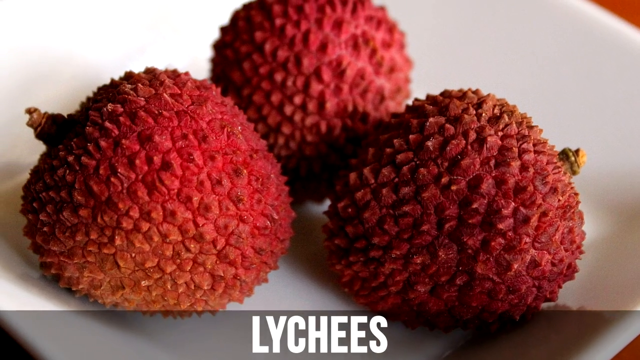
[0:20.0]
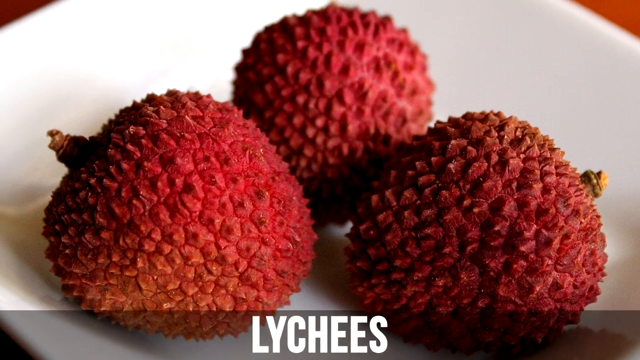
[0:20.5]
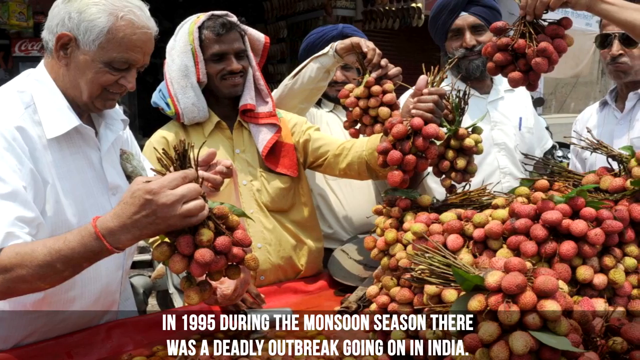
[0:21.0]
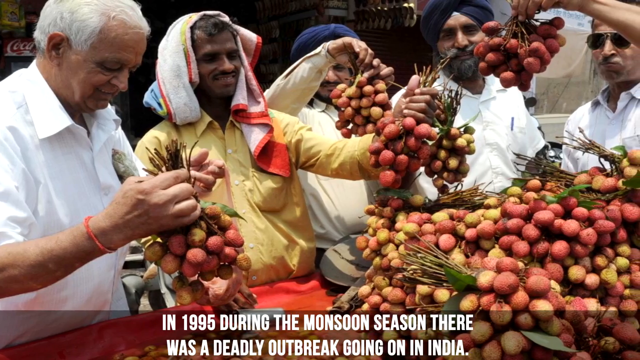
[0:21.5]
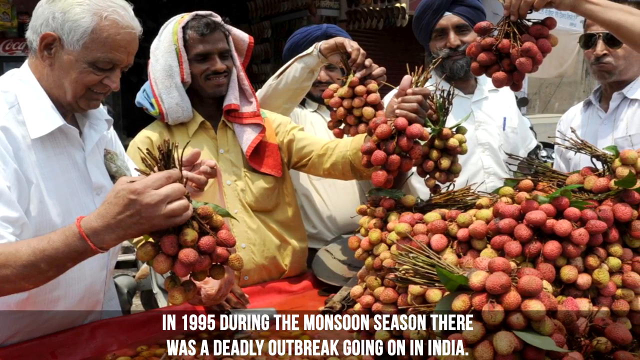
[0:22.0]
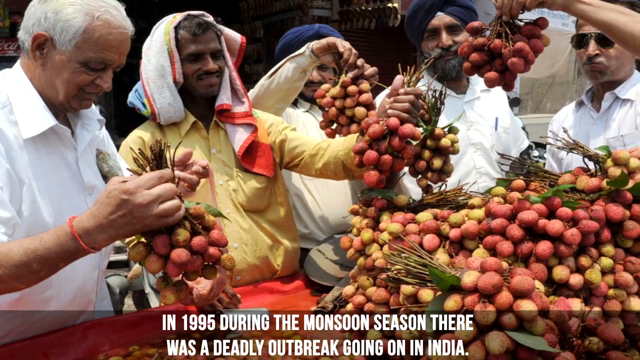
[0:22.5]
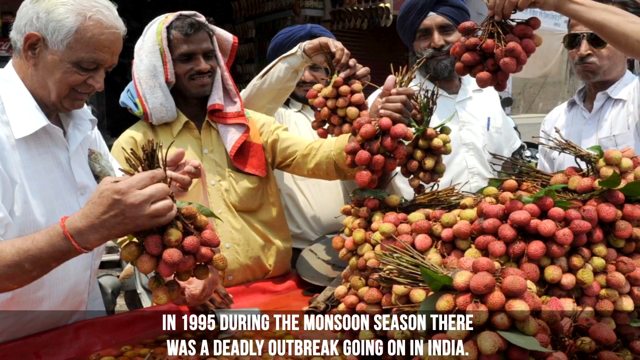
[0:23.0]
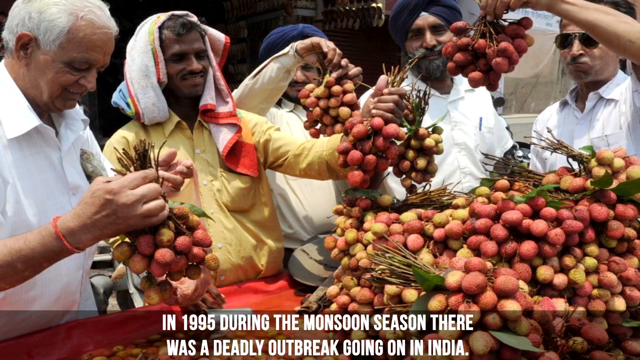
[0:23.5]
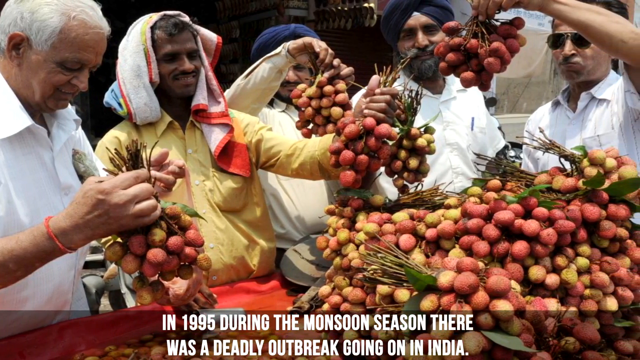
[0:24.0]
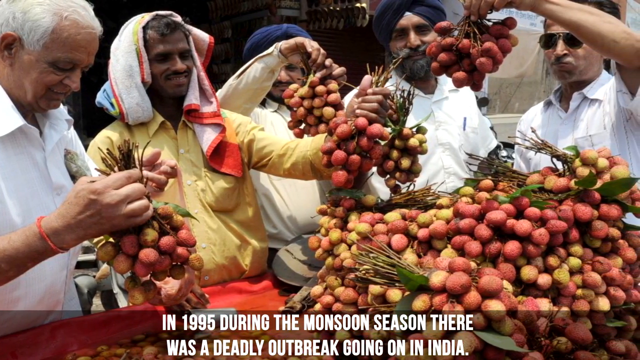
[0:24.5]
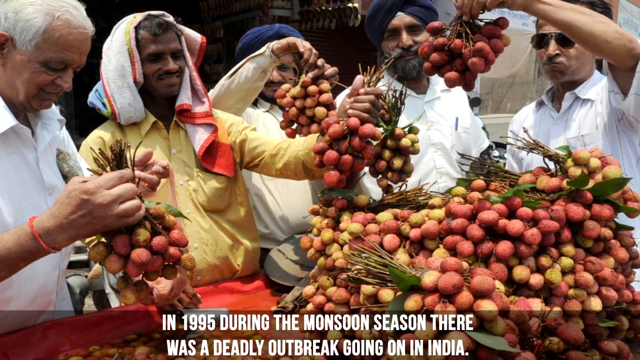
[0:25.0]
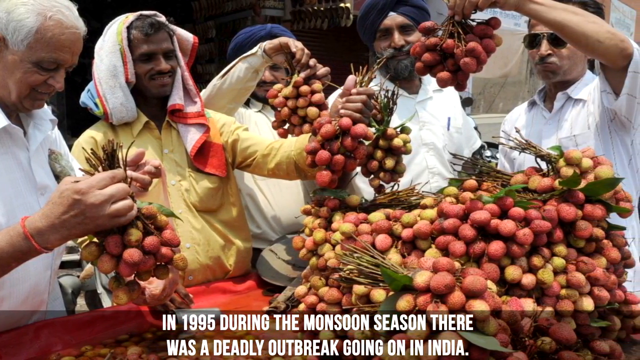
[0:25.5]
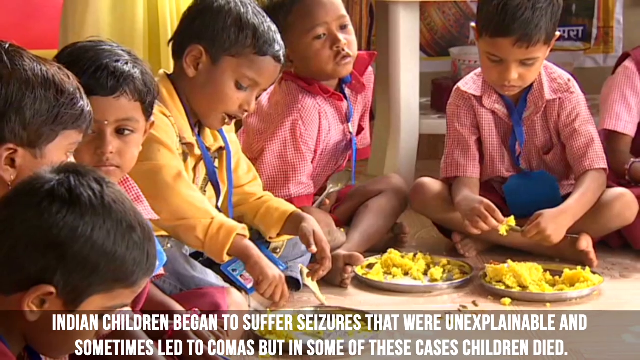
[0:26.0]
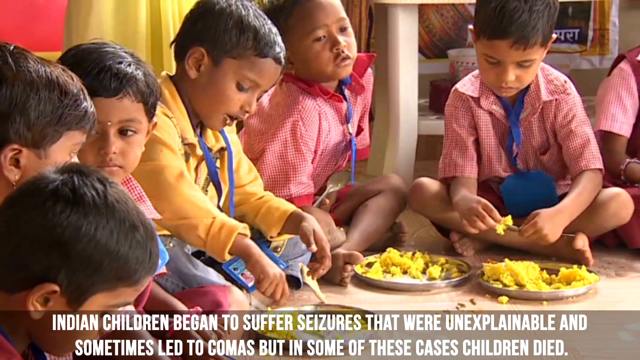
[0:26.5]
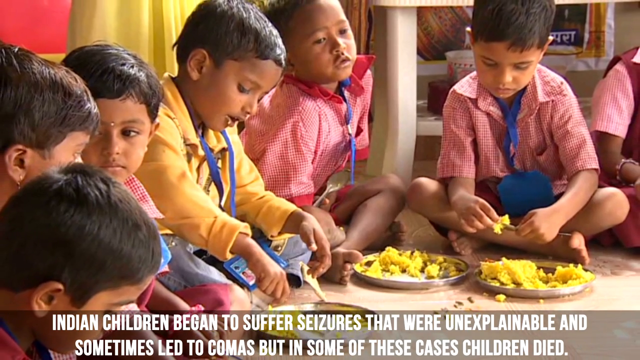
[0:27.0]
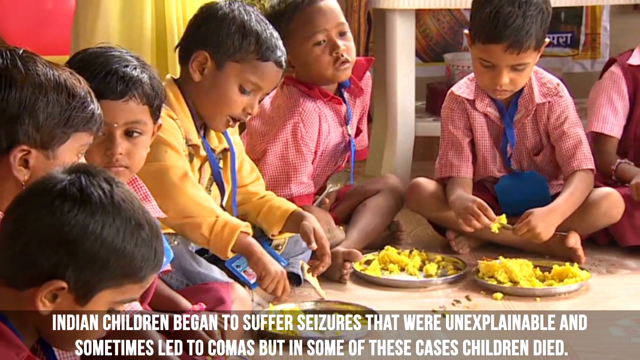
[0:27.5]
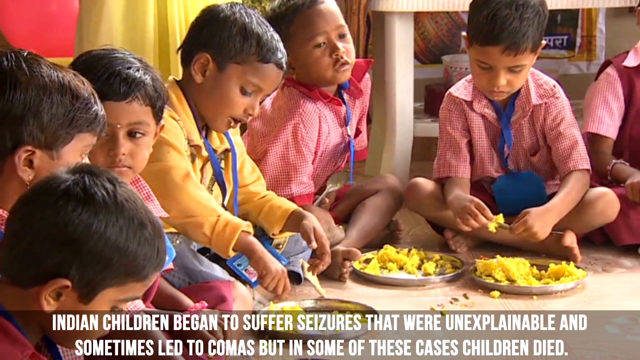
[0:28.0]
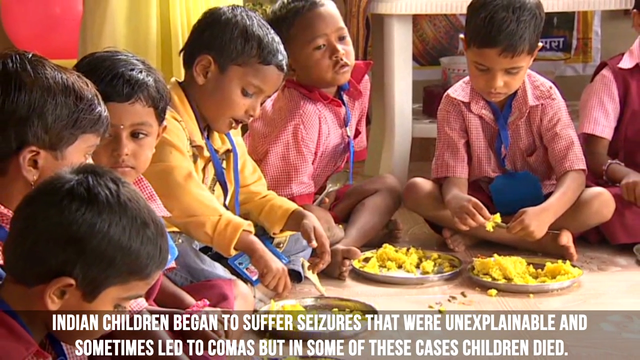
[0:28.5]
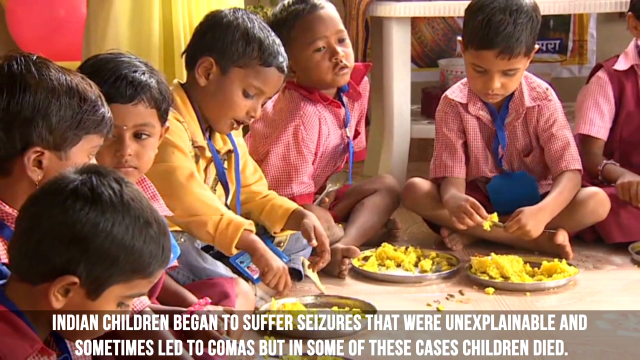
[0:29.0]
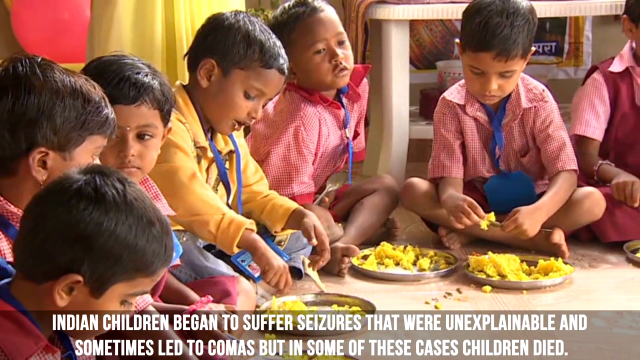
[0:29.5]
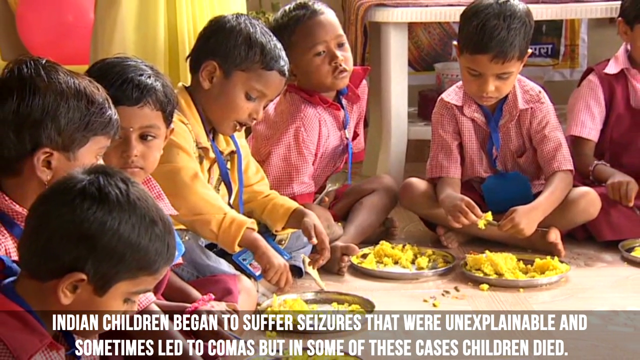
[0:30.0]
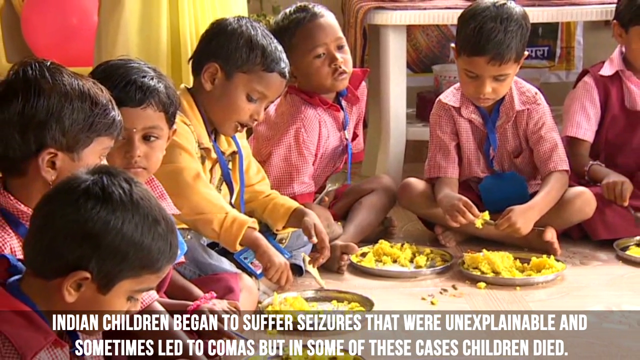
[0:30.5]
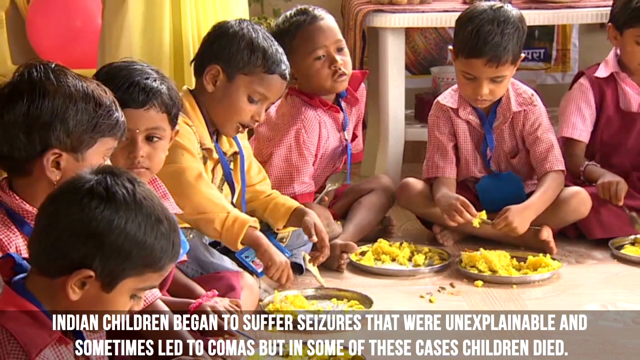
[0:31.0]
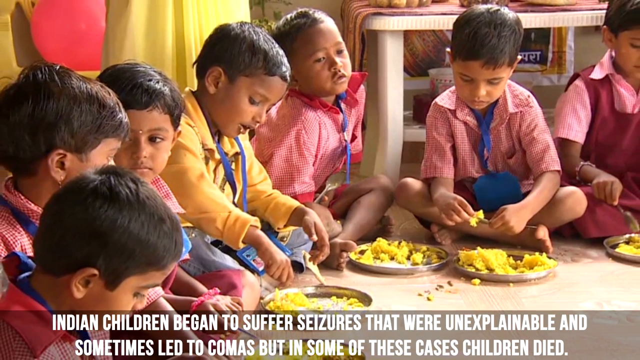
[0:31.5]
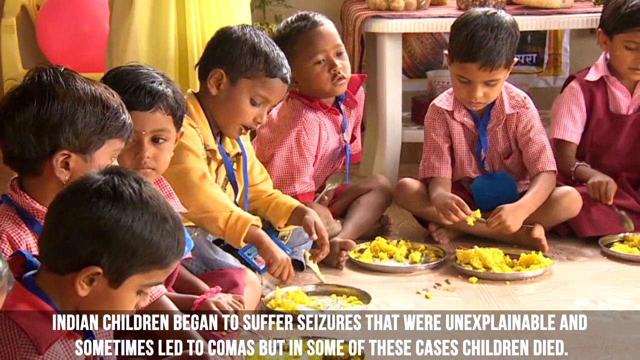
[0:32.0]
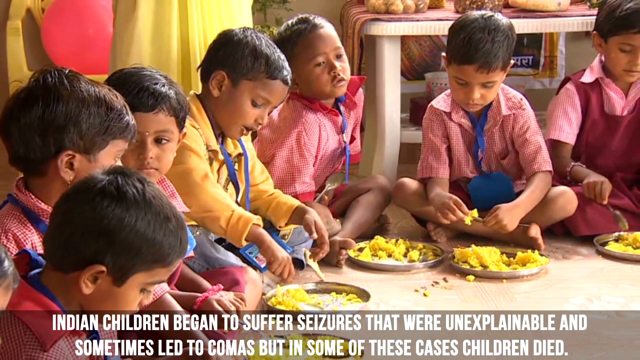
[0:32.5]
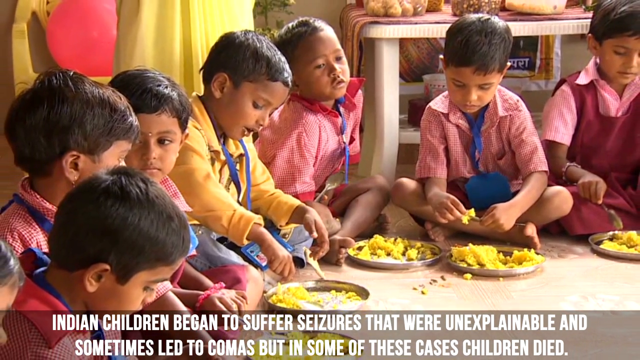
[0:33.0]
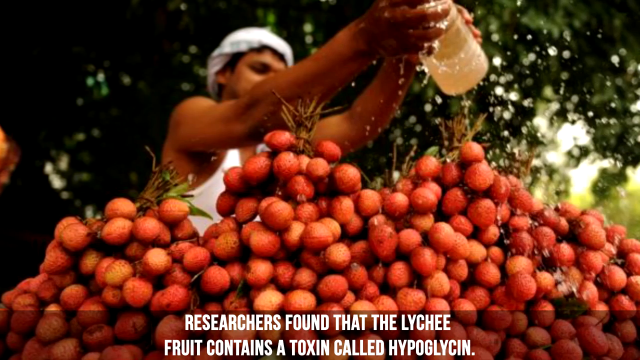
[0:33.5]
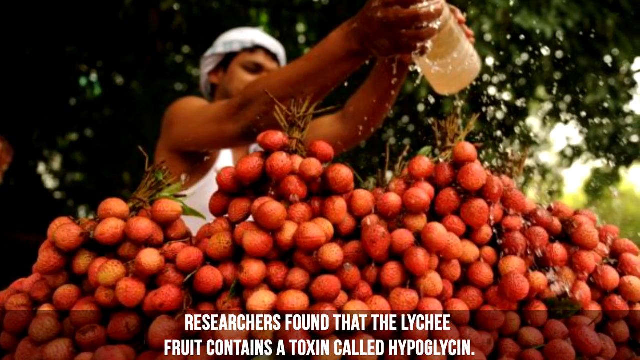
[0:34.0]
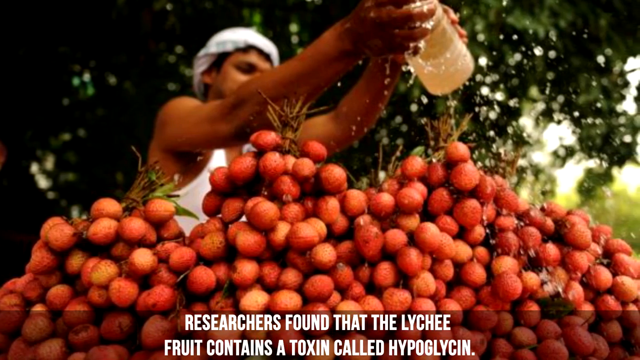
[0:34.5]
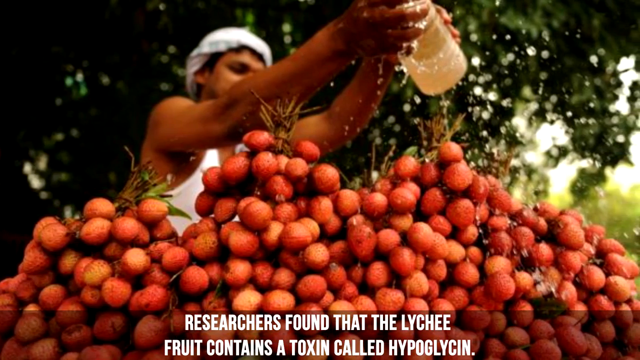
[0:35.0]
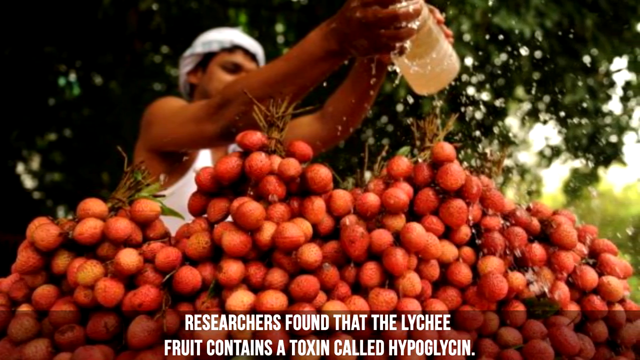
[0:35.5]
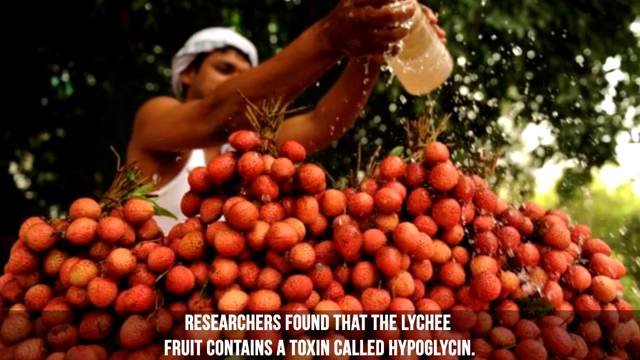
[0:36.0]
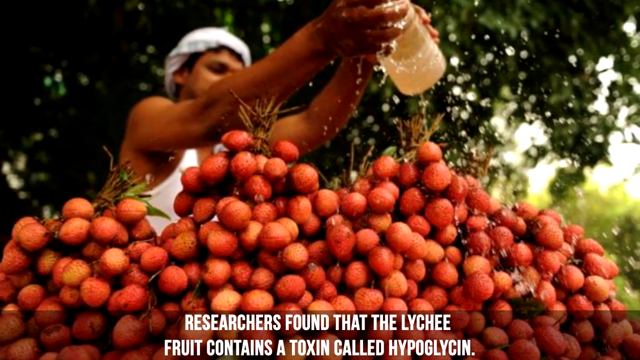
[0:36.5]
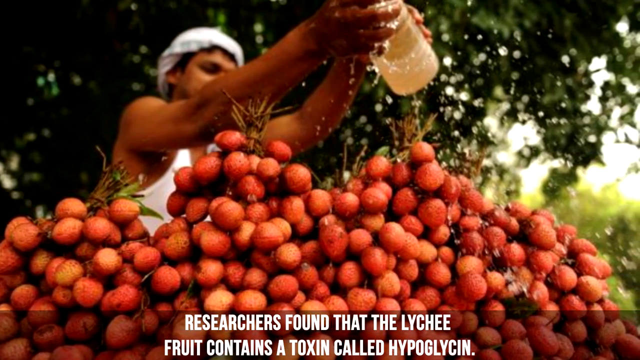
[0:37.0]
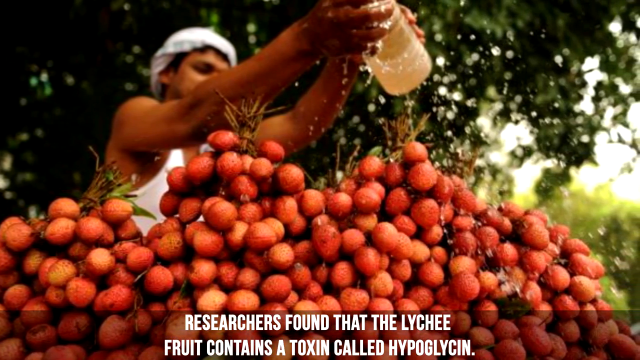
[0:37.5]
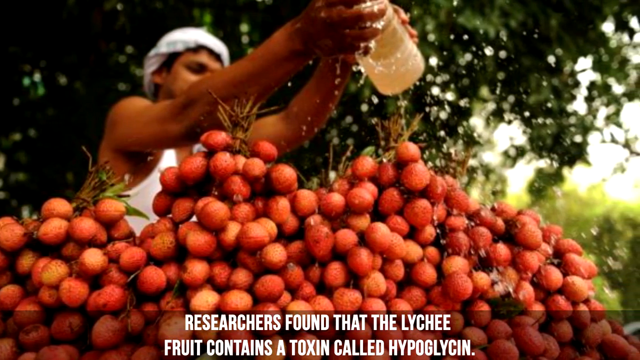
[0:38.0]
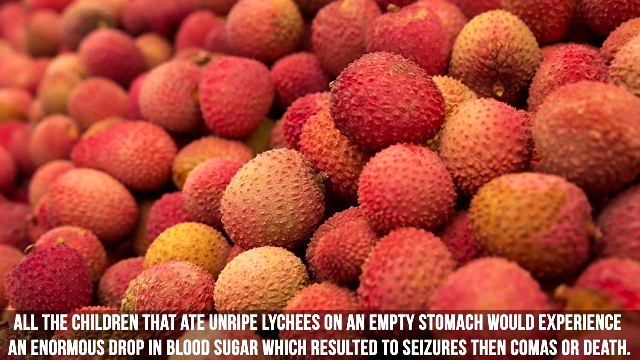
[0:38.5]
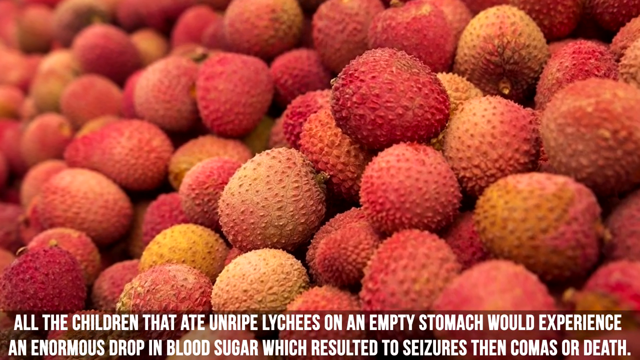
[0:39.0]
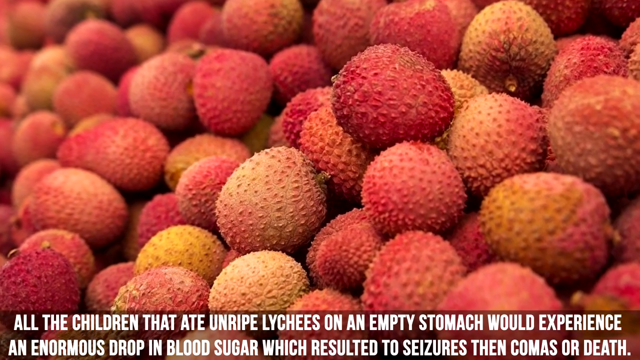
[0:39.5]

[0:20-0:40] A picture of lychees, a type of fruit, appears, and the text says "in 1995 during the monsoon season. There was a deadly outbreak going on in India. Indian children began to suffer seizures that were unexplainable and sometimes led to comas." Meanwhile an image shows children sitting around eating rice. The text then says "in some cases, children died." Next it says researchers found that the lychee fruit contains a toxin called hypoglycine, and goes on to say something to the effect that all of the infected children ate this fruit, showing it was the cause of the outbreak.